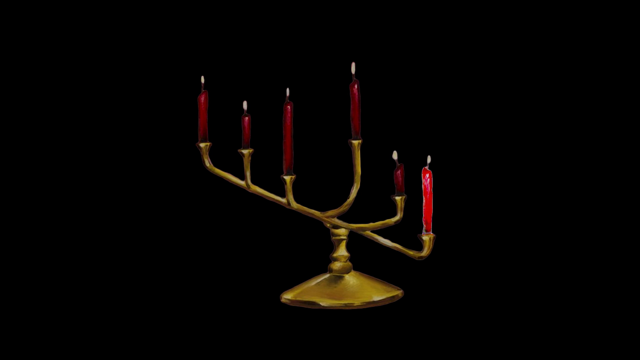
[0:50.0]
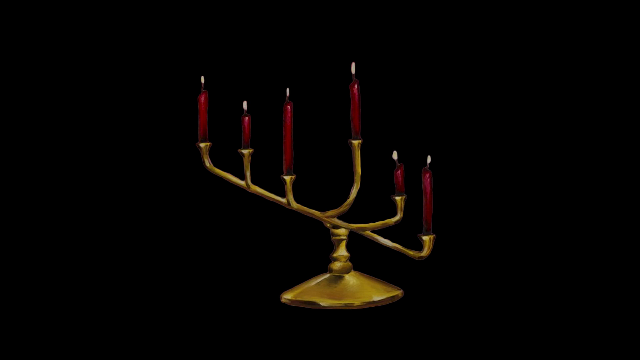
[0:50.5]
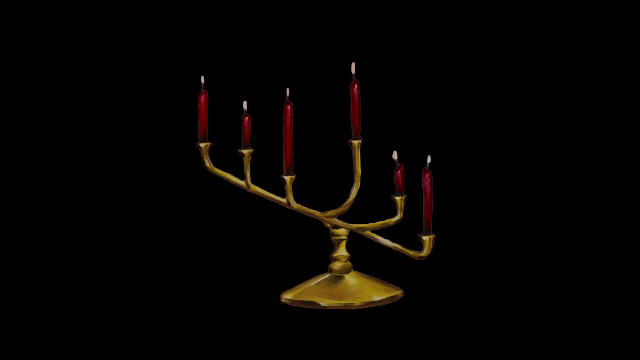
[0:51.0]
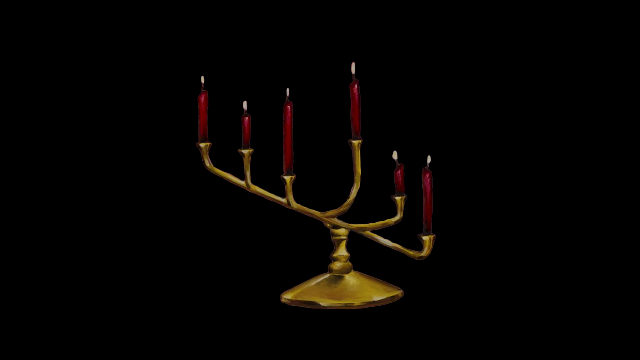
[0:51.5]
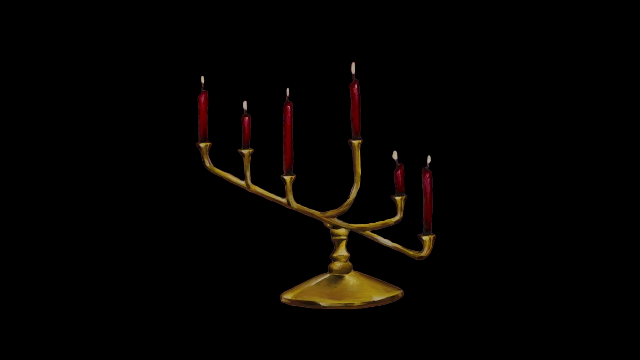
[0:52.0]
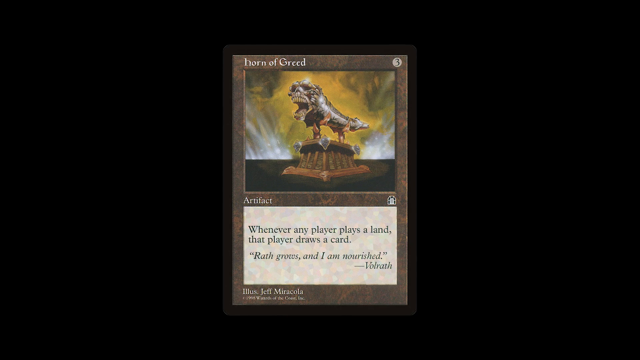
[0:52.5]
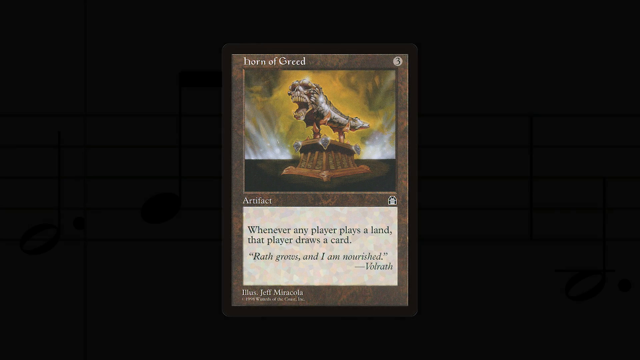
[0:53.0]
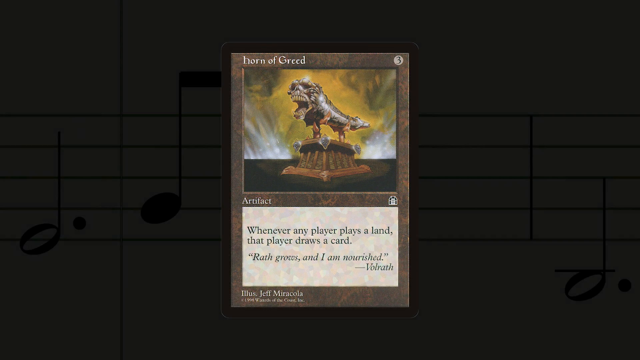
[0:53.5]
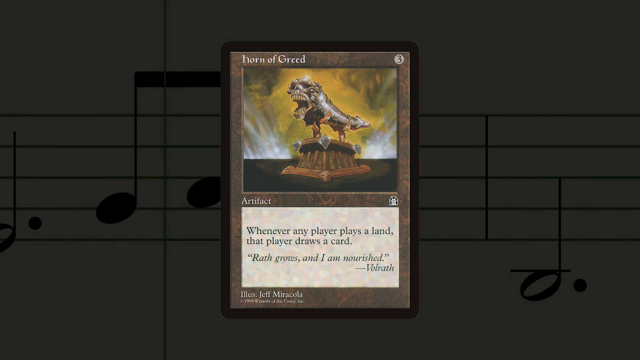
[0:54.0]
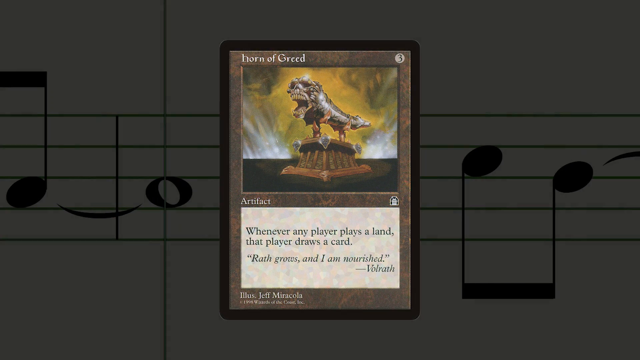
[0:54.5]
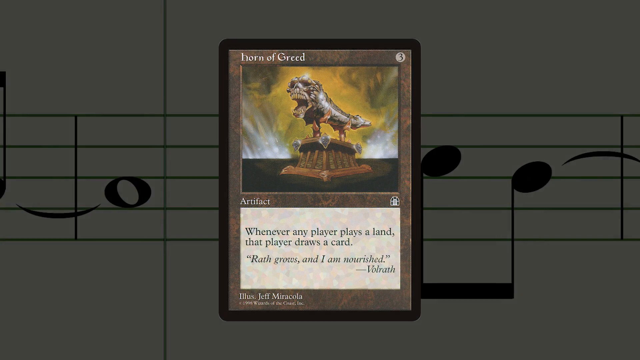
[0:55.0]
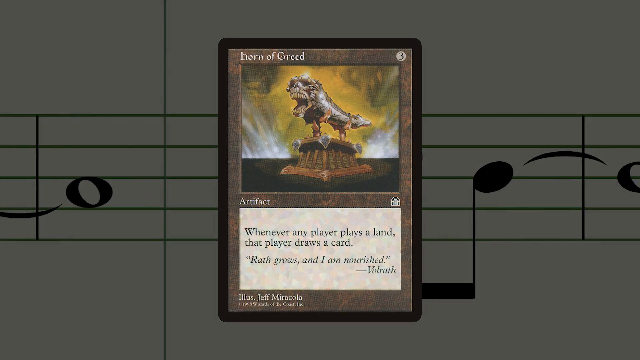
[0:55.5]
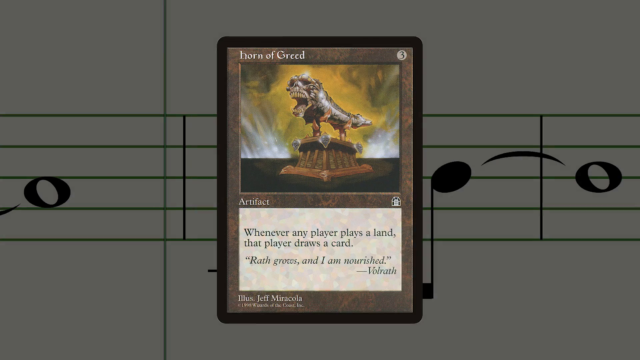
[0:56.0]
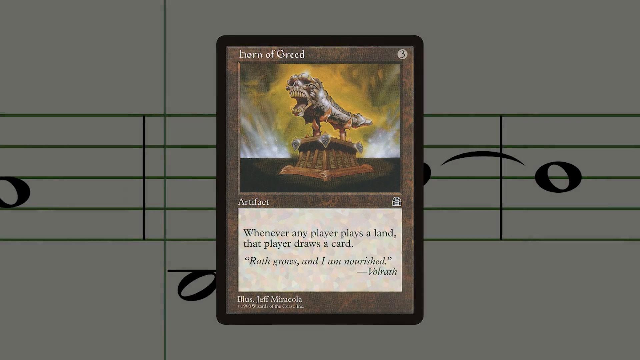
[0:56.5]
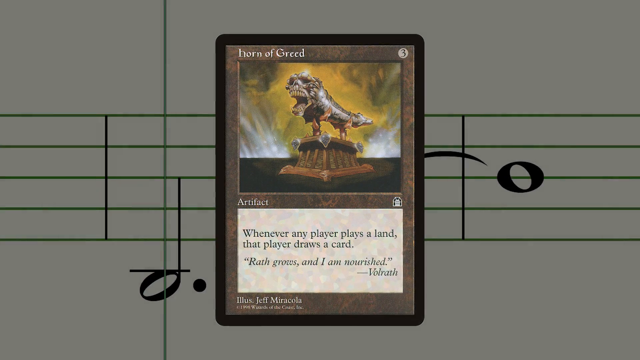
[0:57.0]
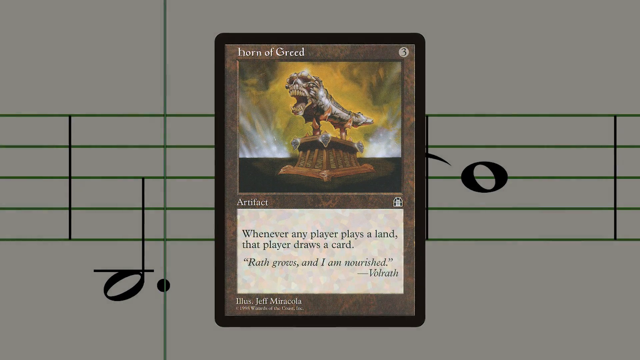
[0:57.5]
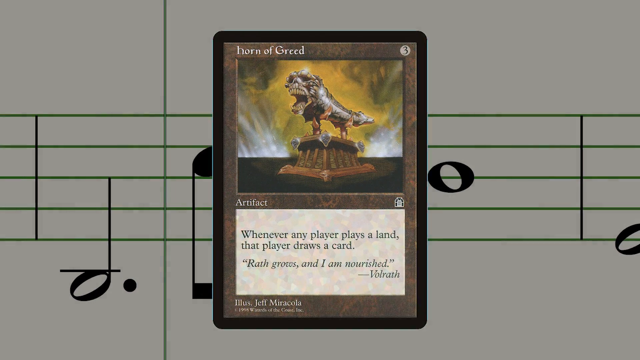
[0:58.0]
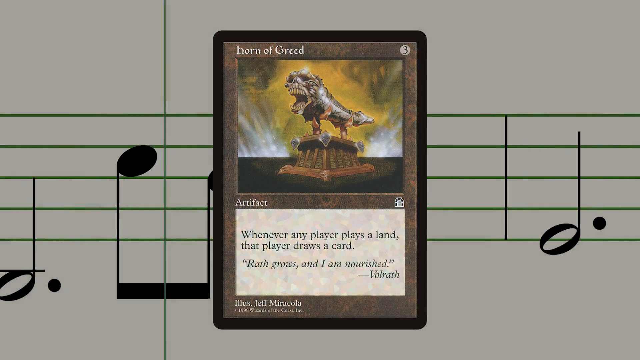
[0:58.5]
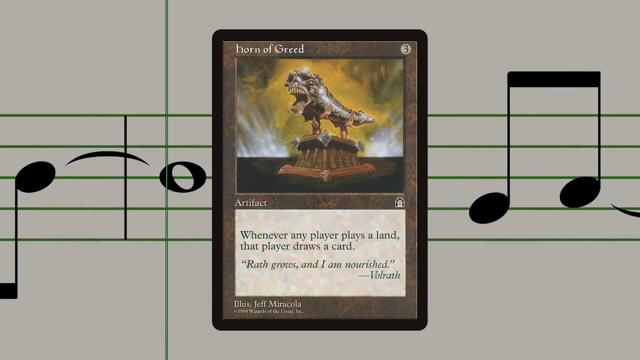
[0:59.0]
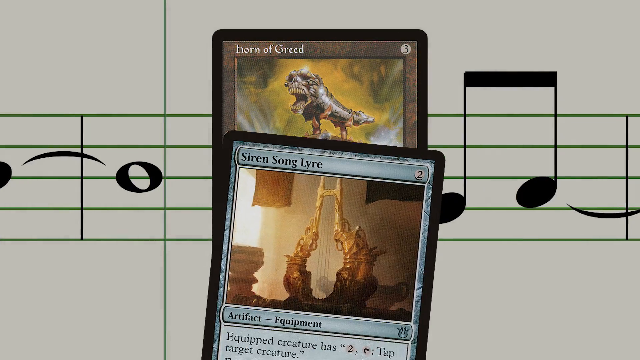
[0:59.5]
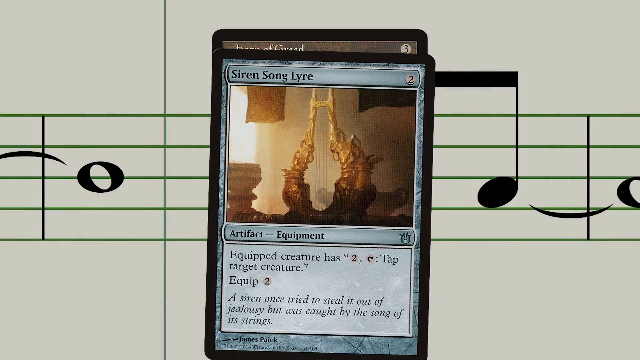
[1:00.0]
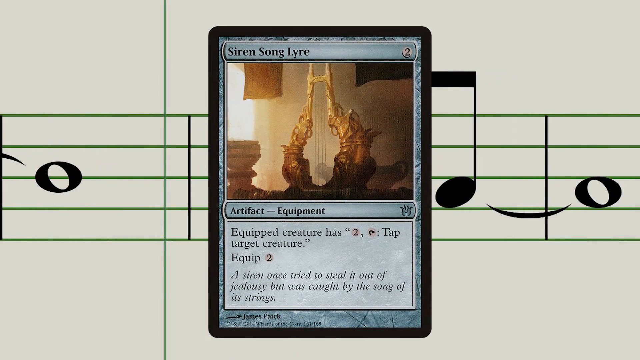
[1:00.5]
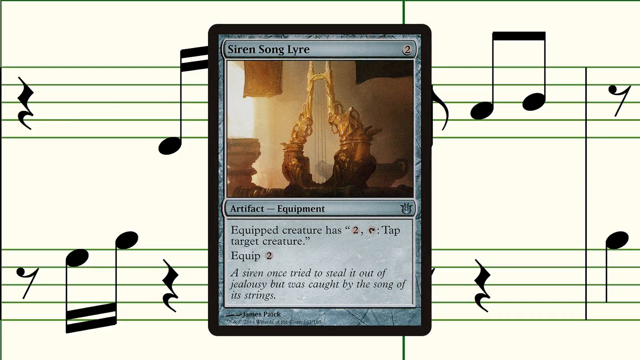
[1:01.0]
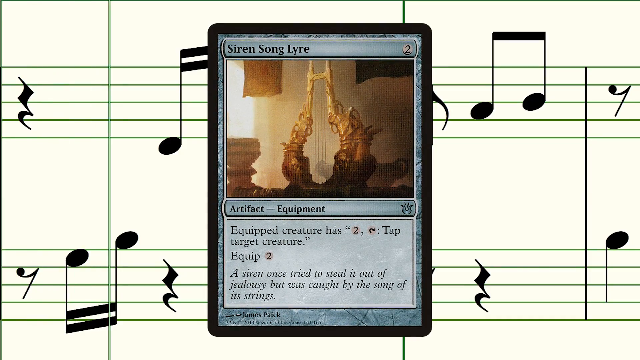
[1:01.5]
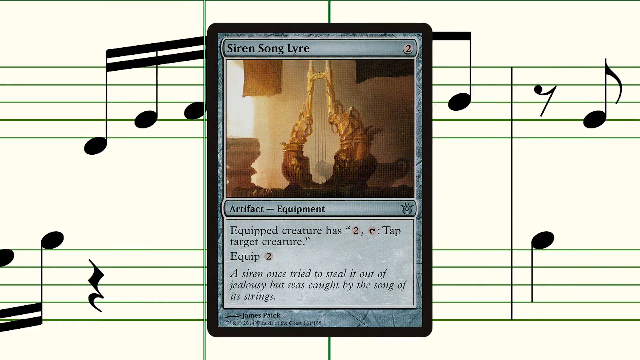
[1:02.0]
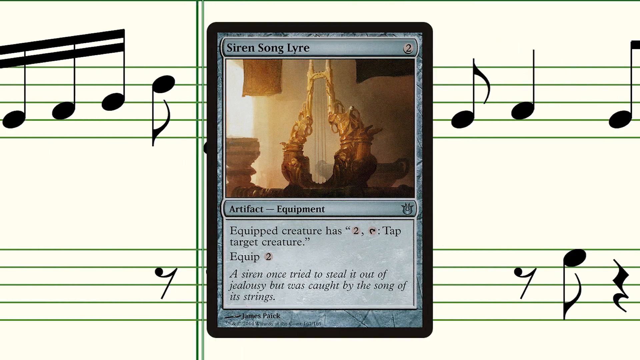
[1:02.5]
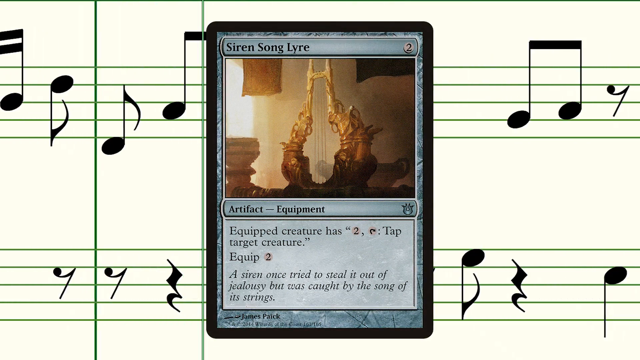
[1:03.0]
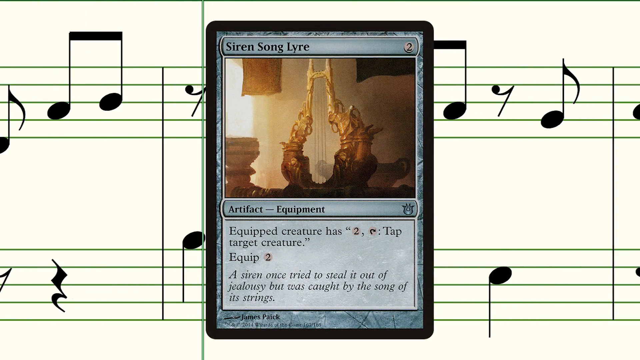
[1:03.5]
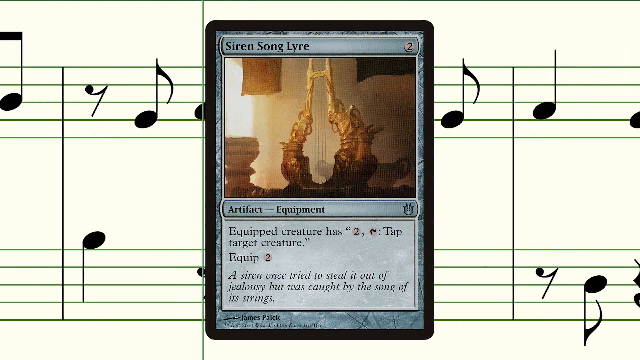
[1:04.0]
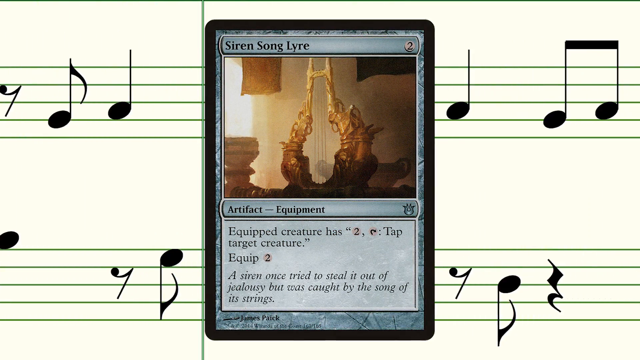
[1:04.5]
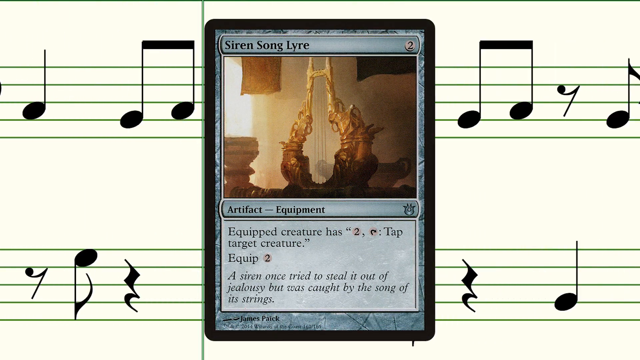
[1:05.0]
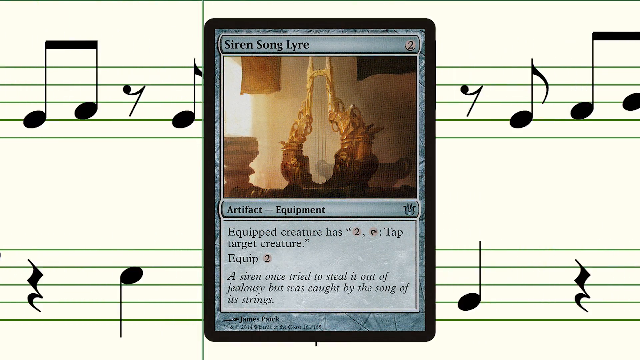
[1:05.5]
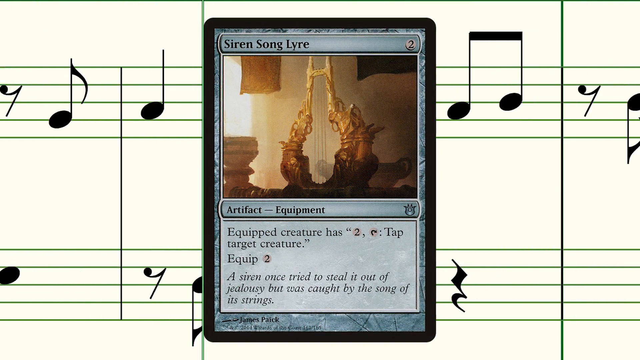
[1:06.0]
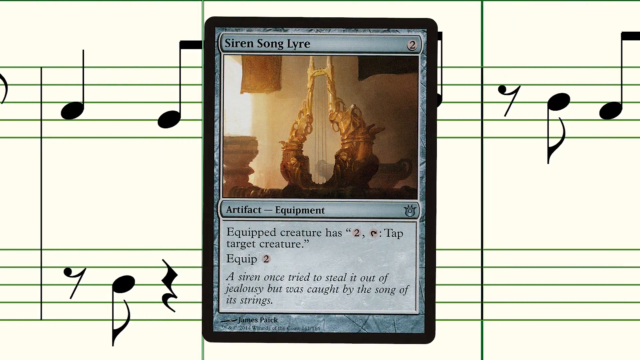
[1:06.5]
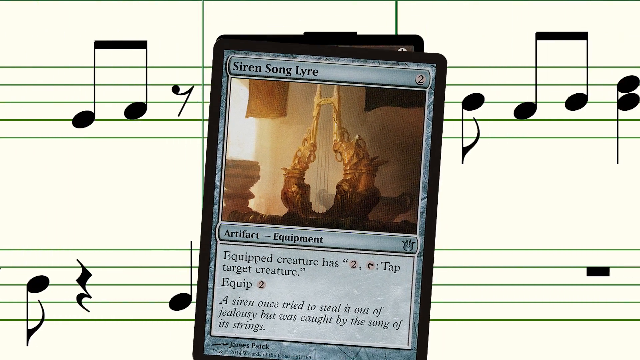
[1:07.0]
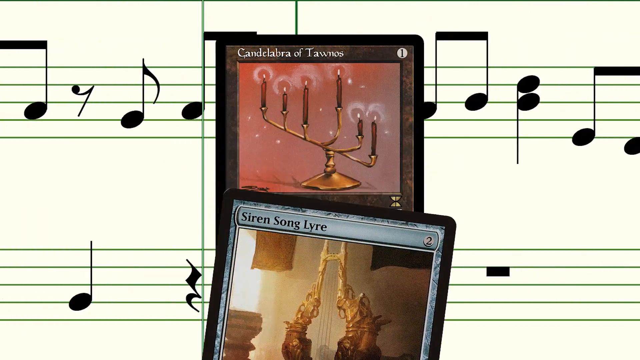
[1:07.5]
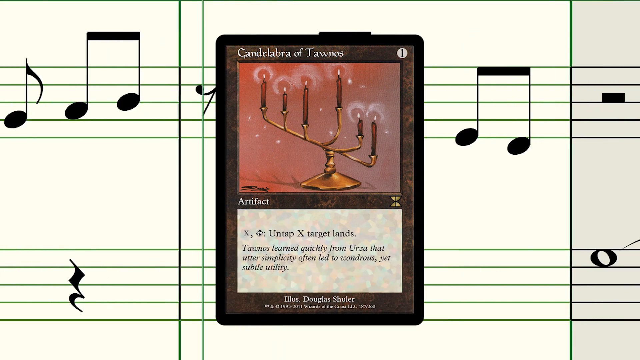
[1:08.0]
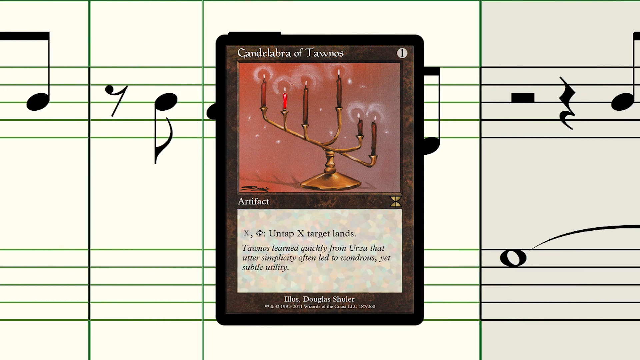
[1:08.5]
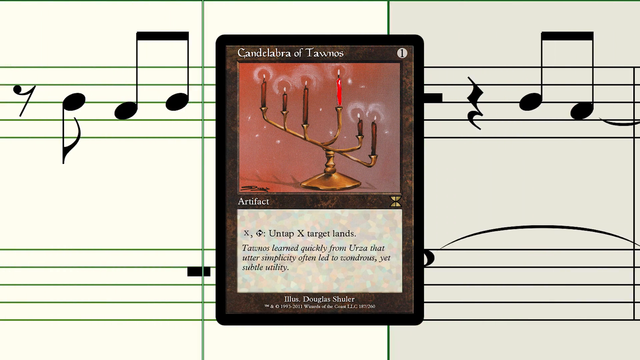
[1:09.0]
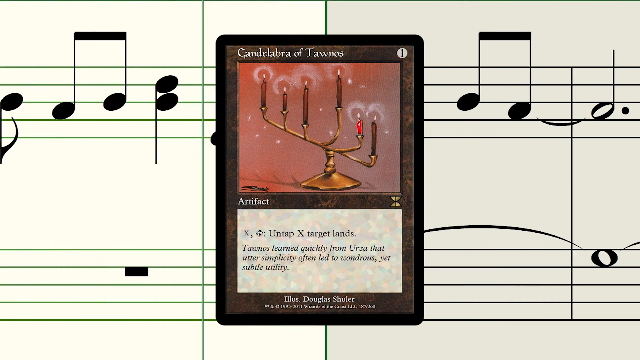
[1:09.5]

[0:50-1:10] The menorah is shown against a black background. A kind of brownish-gray card then appears in the middle of the screen with white text at the top reading "horn of greed"; its picture shows what looks to be maybe two men holding a giant horn, whose left side has a small mouth that is hard to make out. Behind the card, musical notes scroll from right to left. A new card appears from the bottom and overlaps the previous one; it is mostly blue, with text at the top reading "Siren Song Lyre" and a picture of a goldenish harp with sun rays coming in from the top left. This card falls down and disappears off the screen. Another brownish card appears, reading "Candelabra of Tawnos" at the top, with a picture of the same menorah seen earlier; each candle glows one at a time as before, this time against a sort of pinkish-red background.